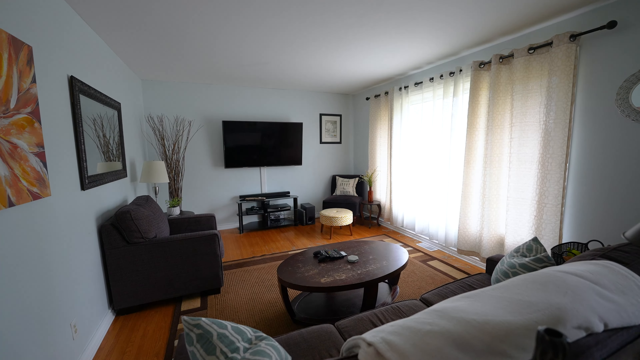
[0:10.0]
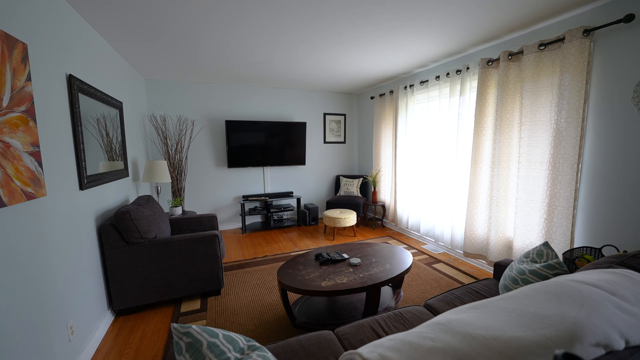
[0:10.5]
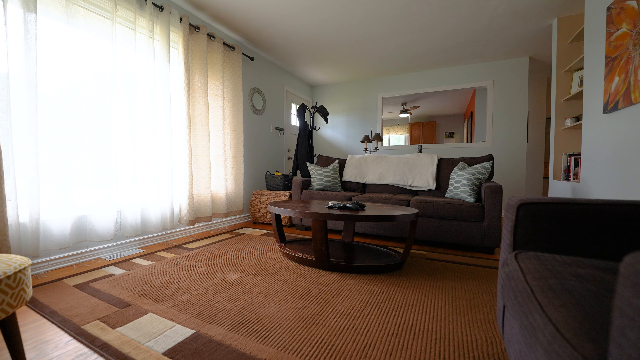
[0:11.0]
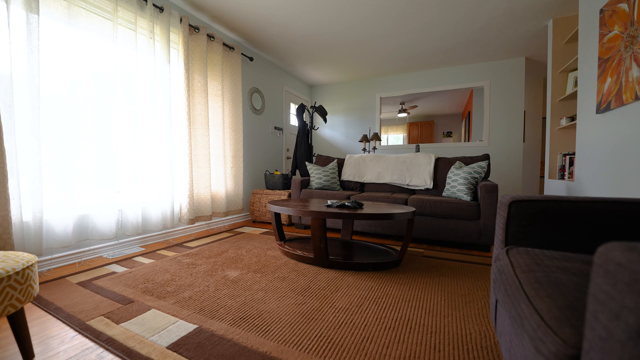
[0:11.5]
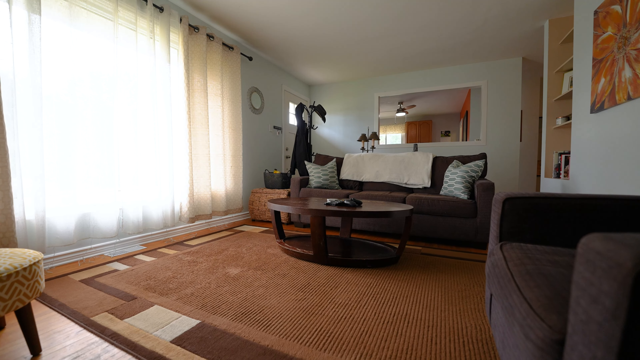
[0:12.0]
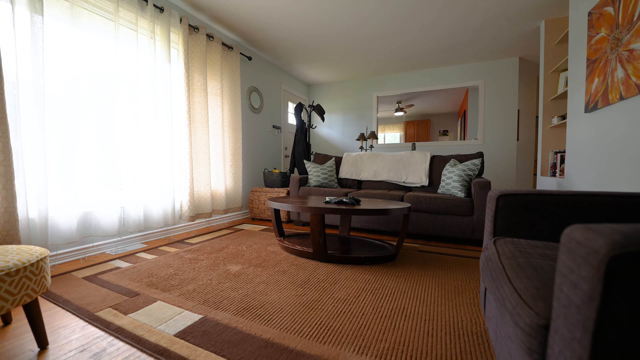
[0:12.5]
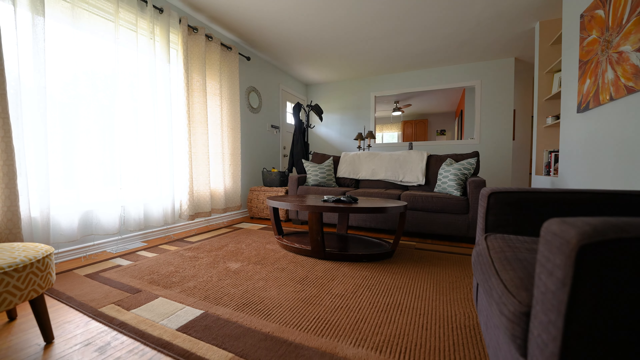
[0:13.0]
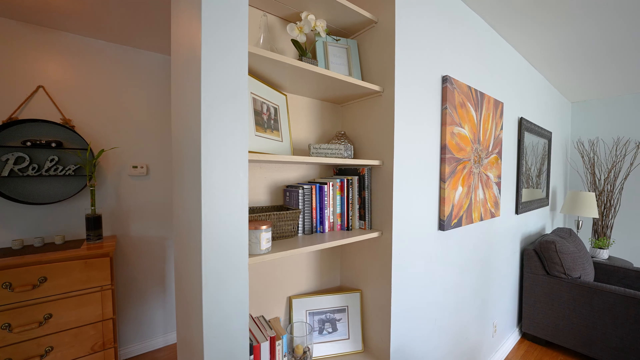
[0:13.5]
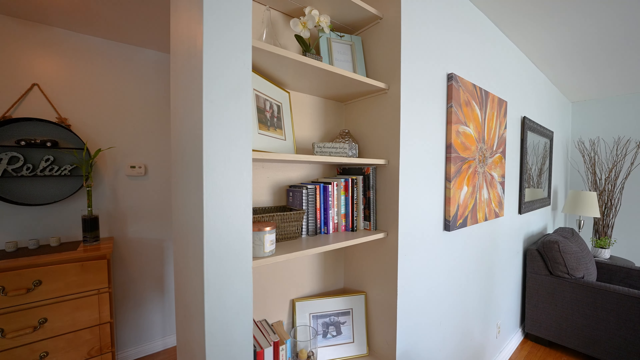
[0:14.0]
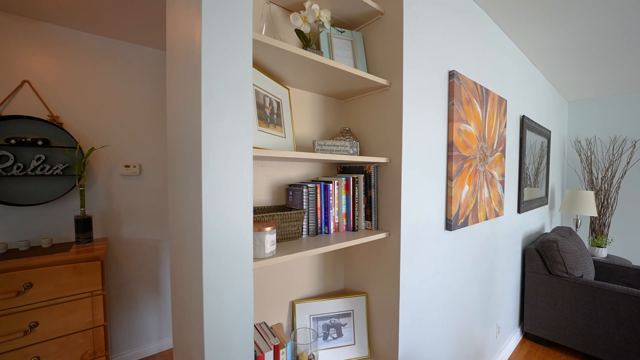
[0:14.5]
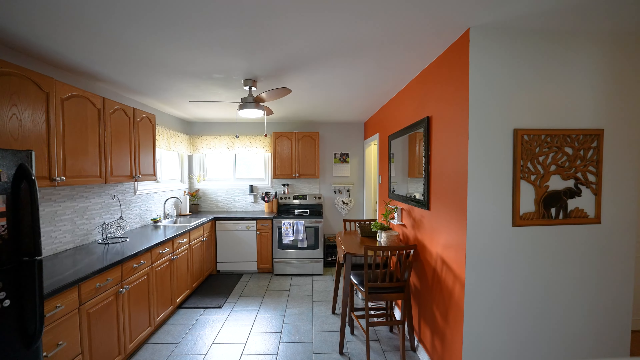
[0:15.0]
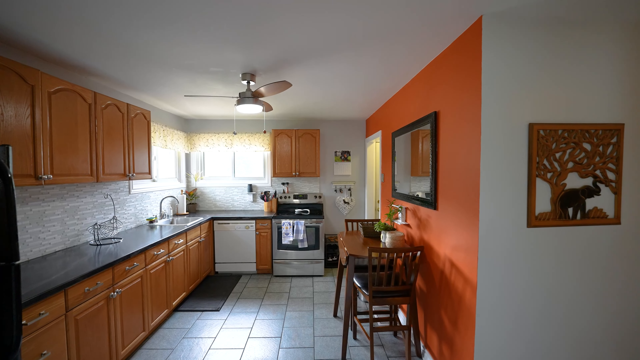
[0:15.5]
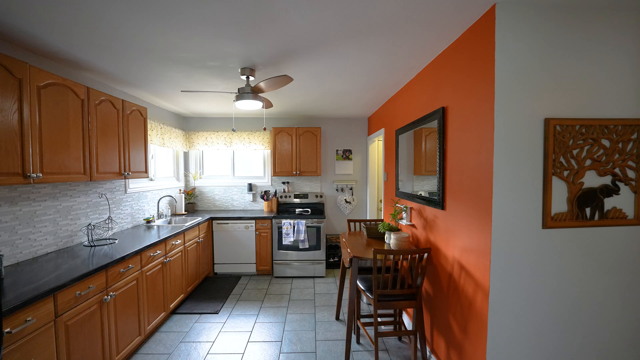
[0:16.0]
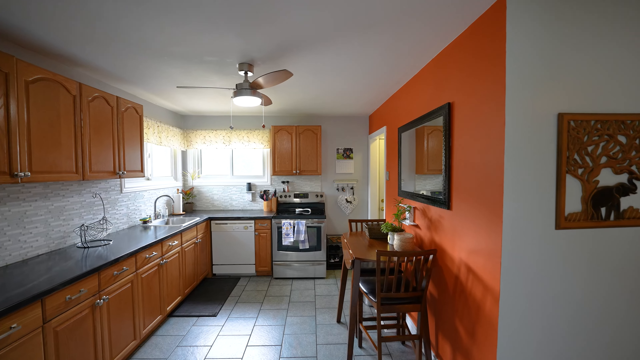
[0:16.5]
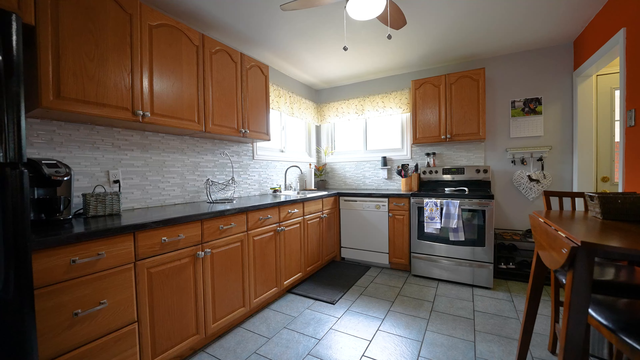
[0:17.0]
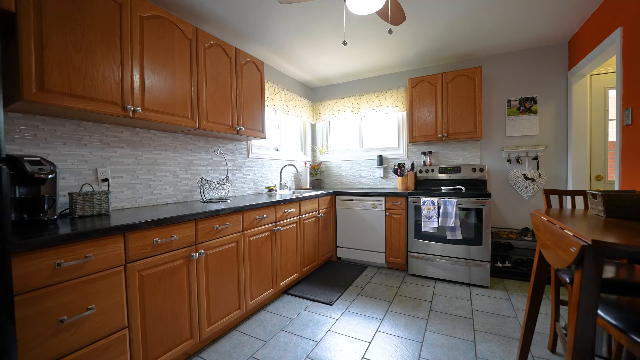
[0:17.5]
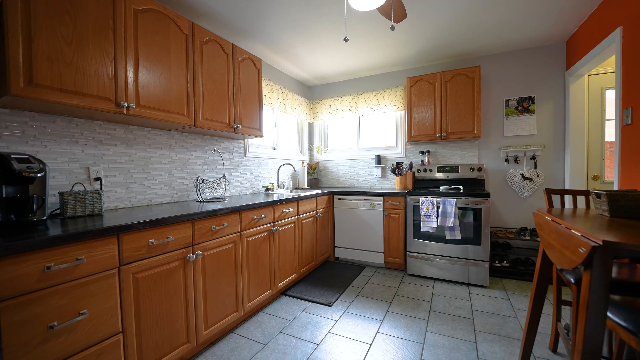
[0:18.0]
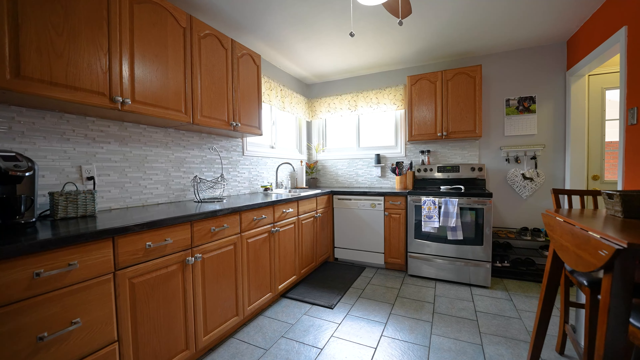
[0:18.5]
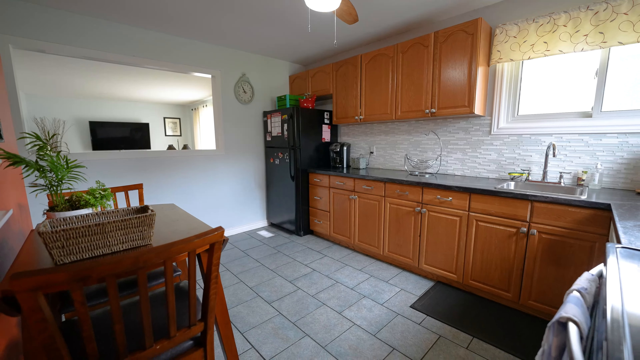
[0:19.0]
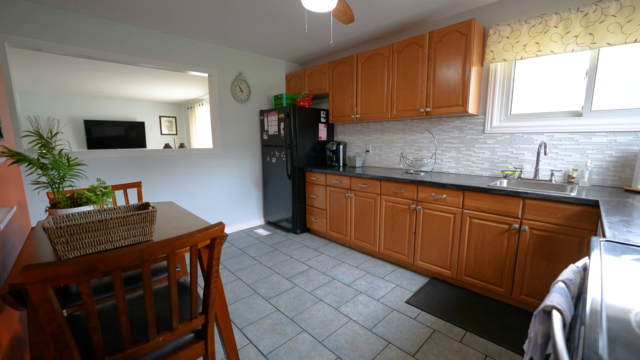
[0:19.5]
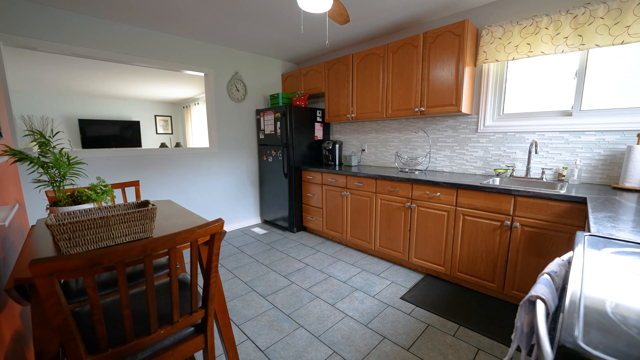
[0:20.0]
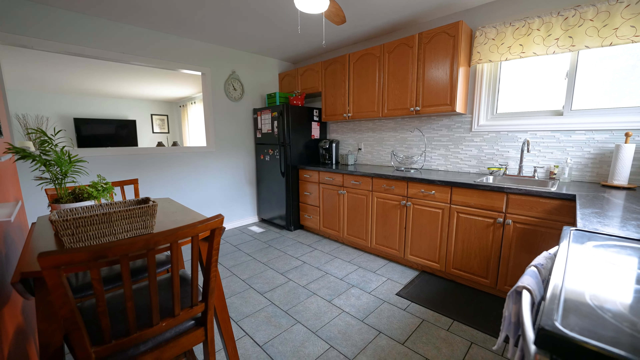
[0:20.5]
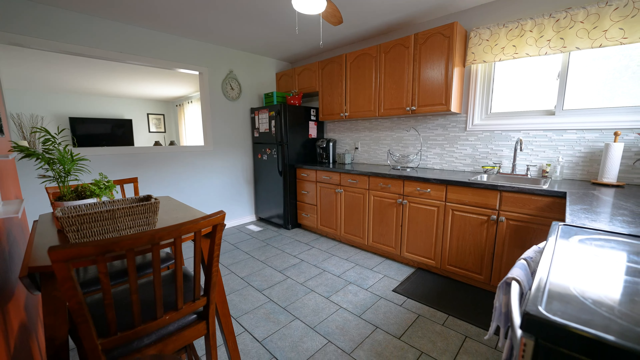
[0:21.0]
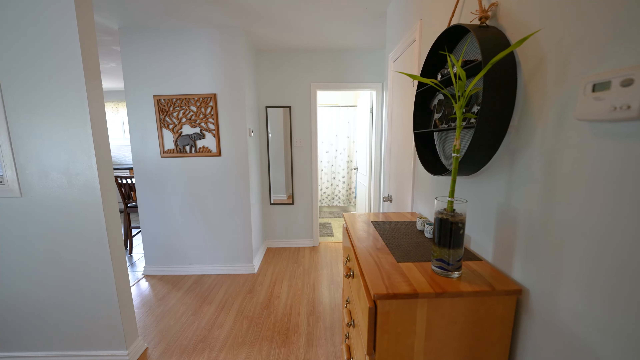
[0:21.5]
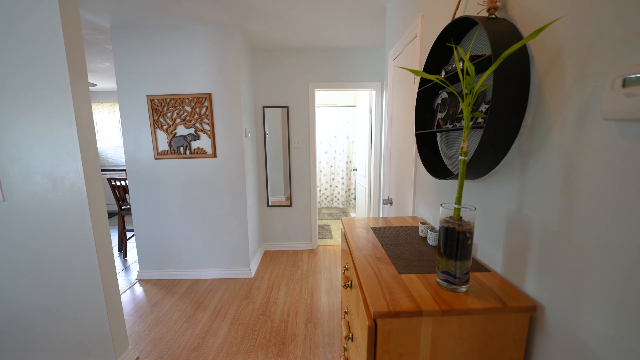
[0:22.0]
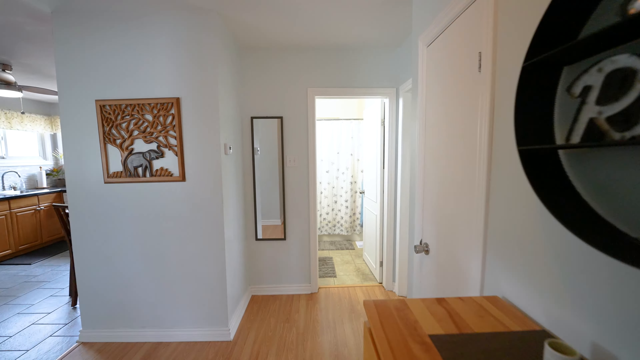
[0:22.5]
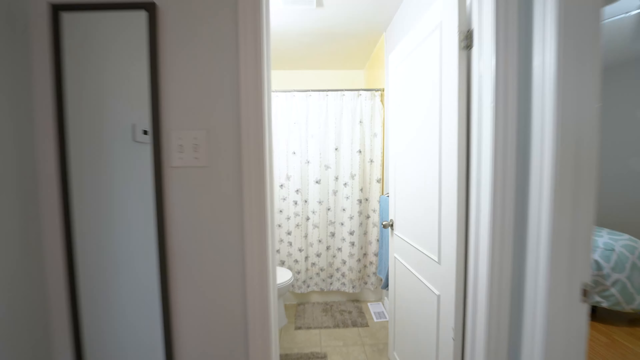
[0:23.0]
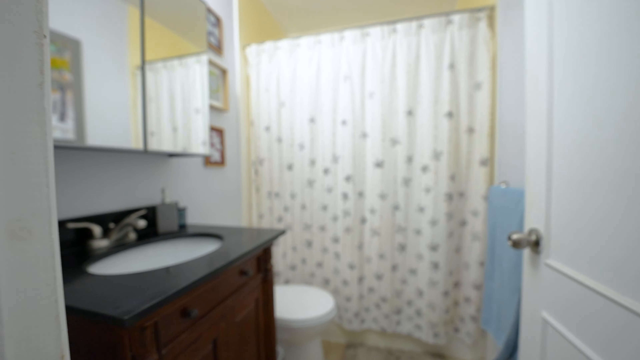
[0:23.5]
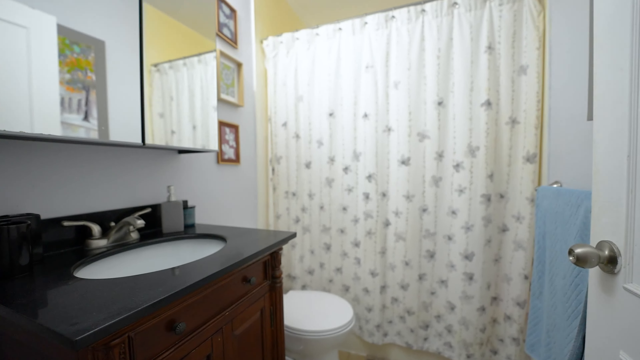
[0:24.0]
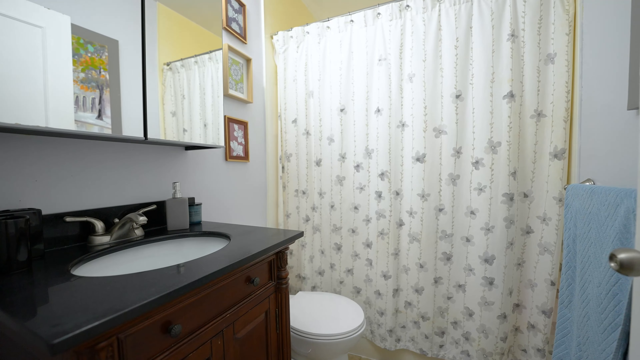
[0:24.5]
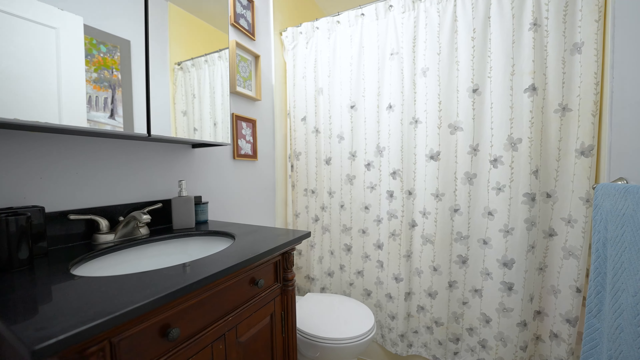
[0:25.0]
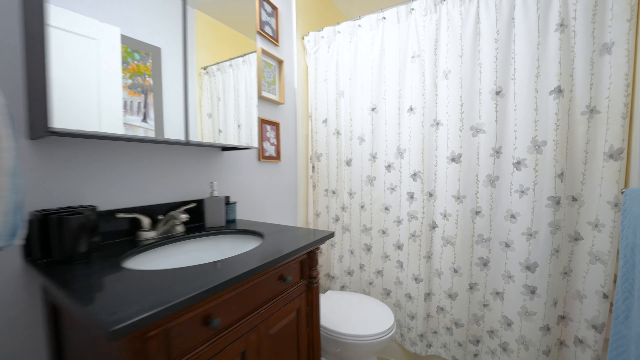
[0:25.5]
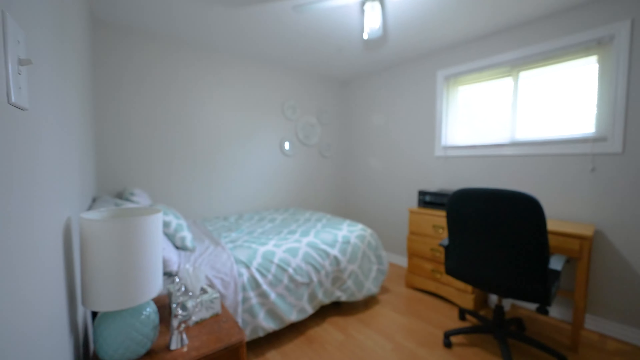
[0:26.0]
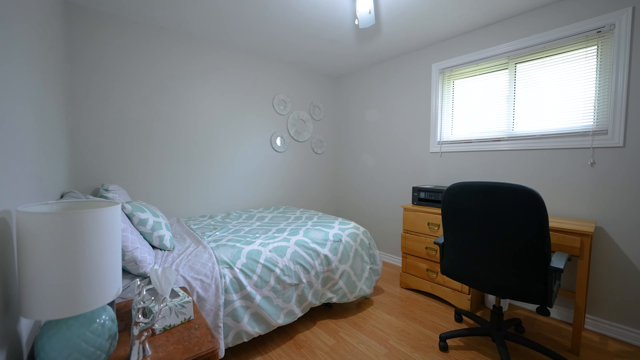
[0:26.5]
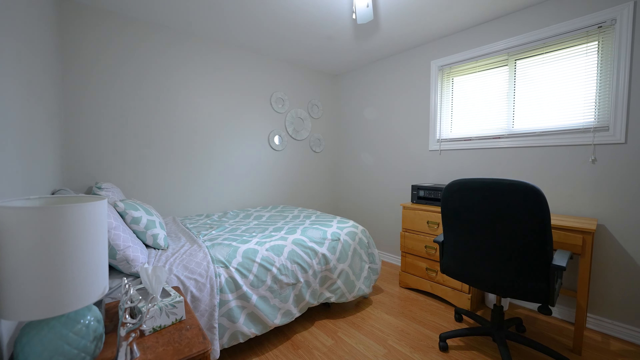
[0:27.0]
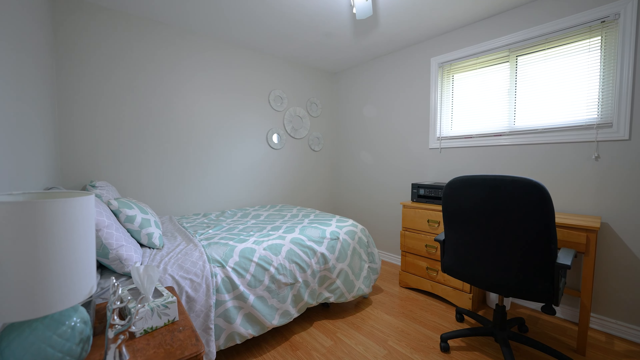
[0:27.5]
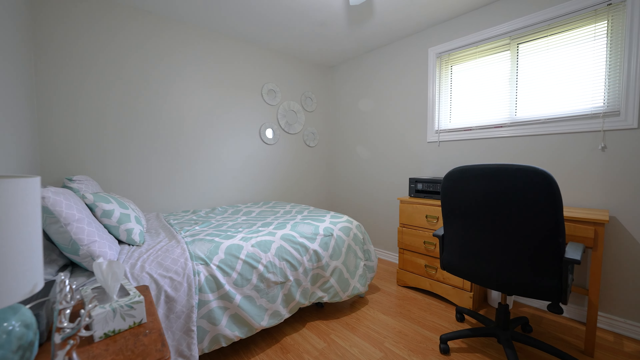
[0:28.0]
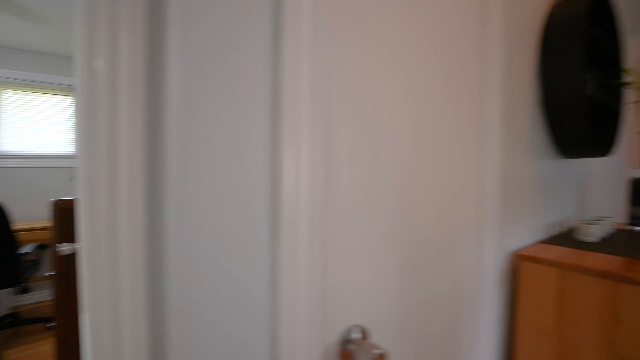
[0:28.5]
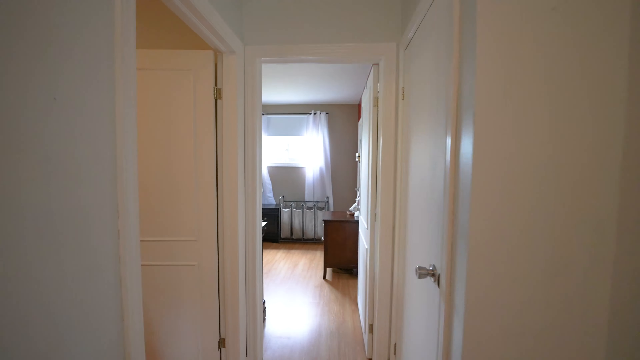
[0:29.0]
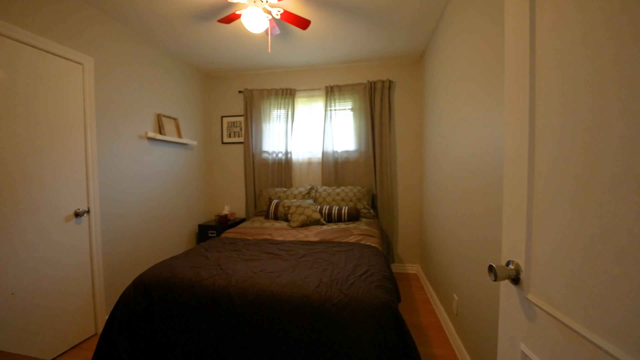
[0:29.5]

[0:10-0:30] Inside the home, the living room has one big window on the right, a couch and a love seat, and wooden floors; the room is a nice size, roughly 20 by 30 at a guess. Behind it is the kitchen, with cabinets built into the wall and a bookshelf. The kitchen has a tile floor, granite countertops, wooden cabinets above and beneath, a chrome stove, a dishwasher, a black refrigerator, plenty of room and a dining table. The view then looks down the hallway toward the first bathroom, which has a shower, one sink, one toilet and a mirrored cabinet. The guest room is a smaller room with windows and a smaller bed.